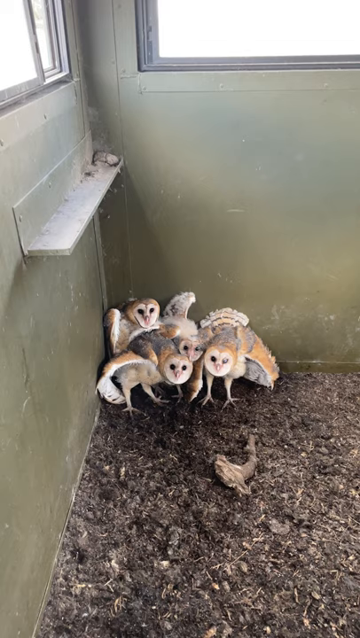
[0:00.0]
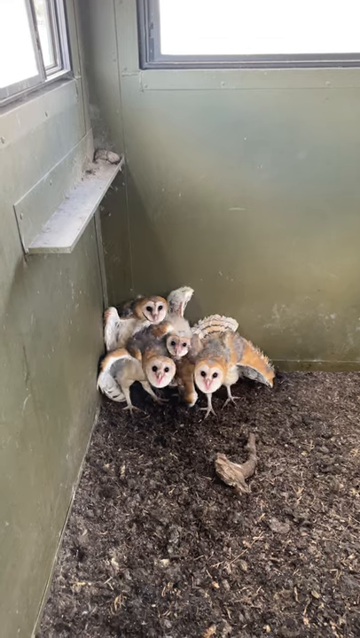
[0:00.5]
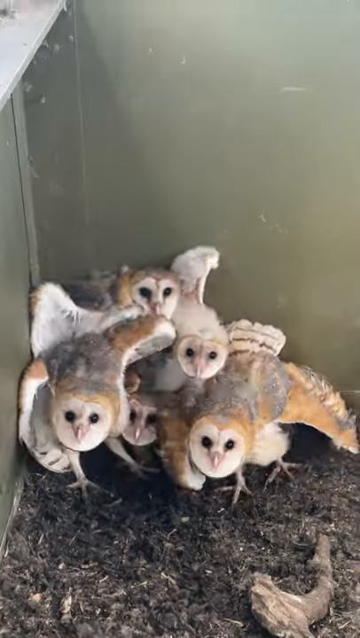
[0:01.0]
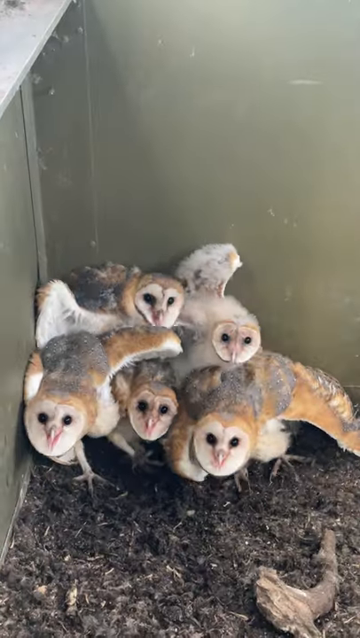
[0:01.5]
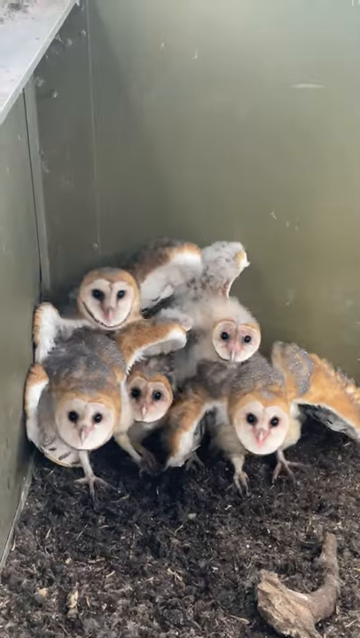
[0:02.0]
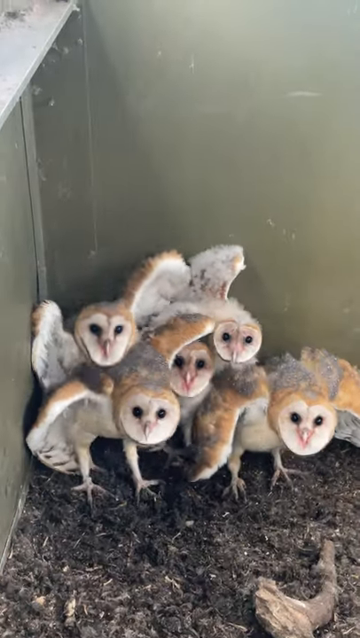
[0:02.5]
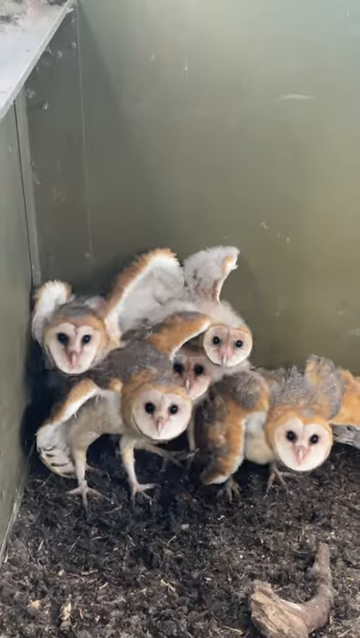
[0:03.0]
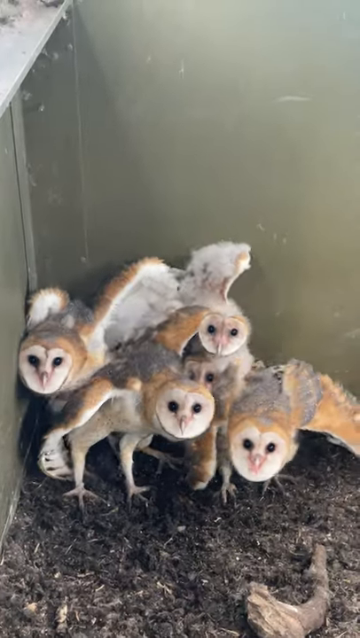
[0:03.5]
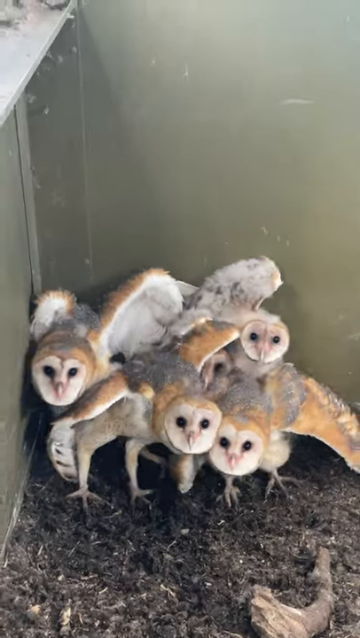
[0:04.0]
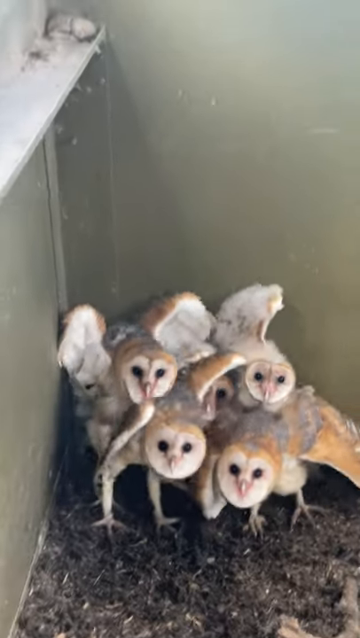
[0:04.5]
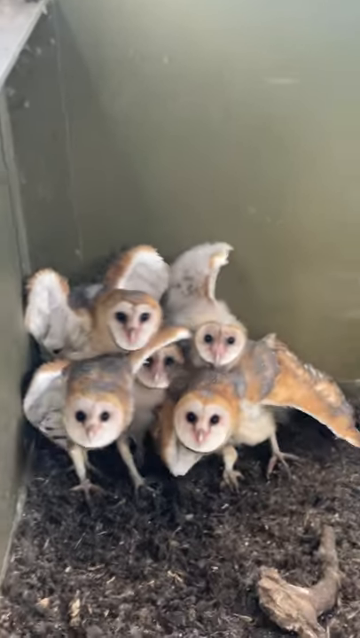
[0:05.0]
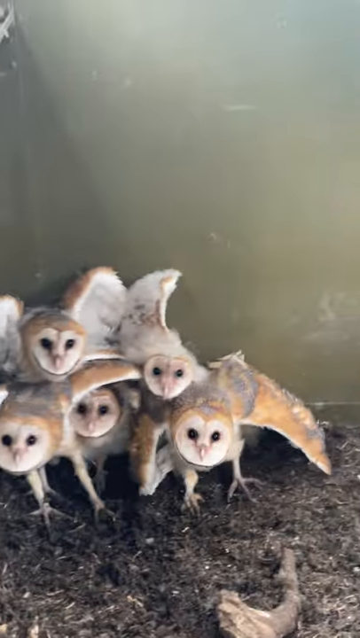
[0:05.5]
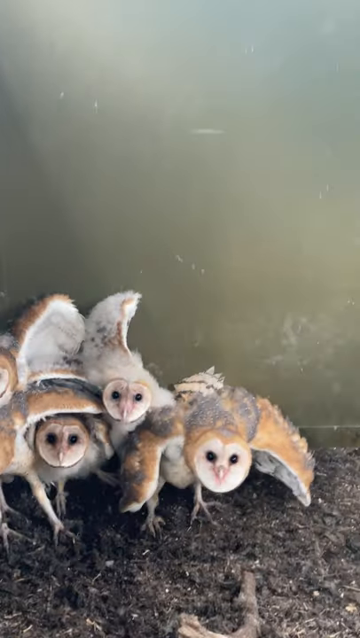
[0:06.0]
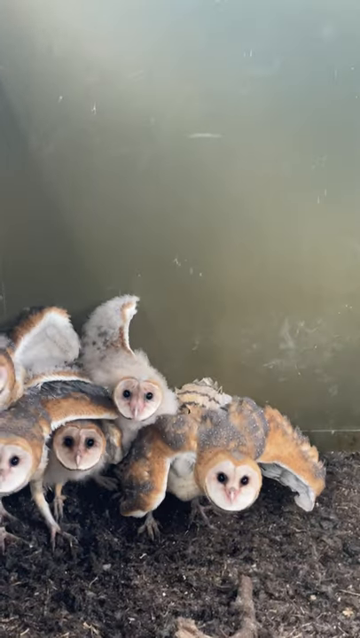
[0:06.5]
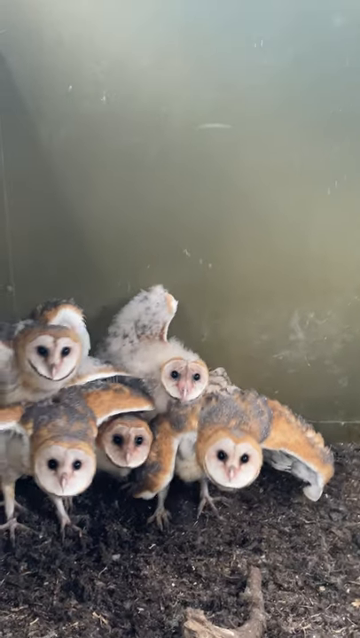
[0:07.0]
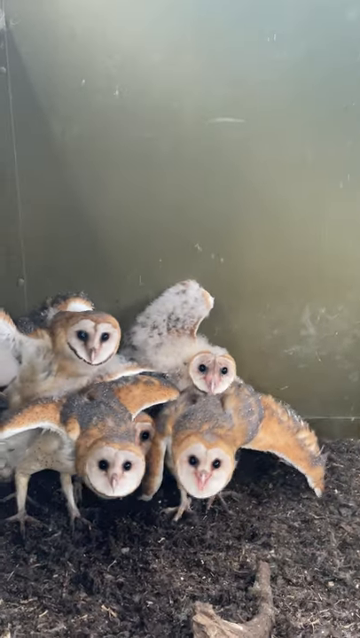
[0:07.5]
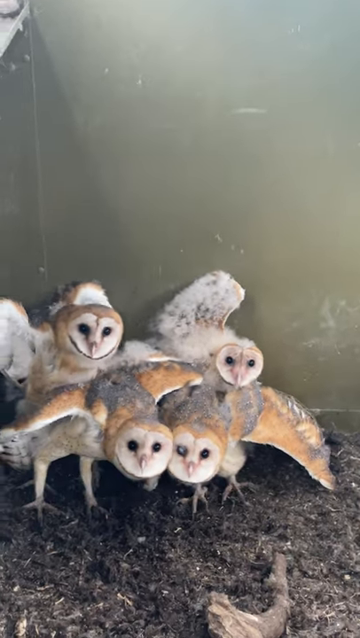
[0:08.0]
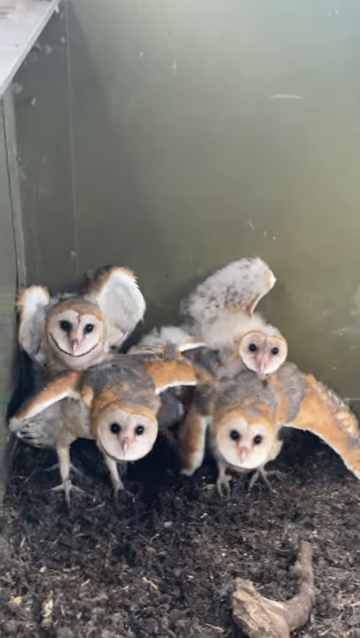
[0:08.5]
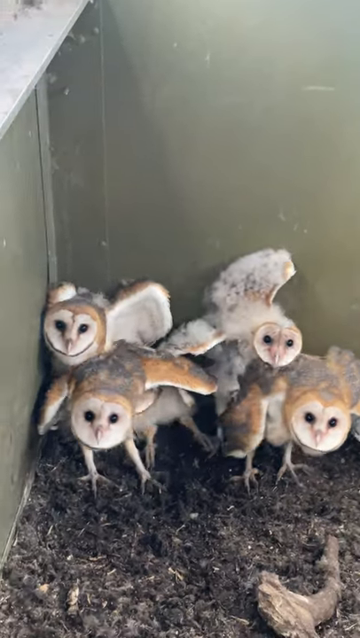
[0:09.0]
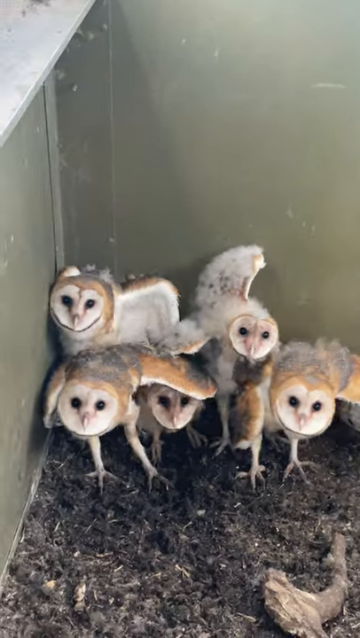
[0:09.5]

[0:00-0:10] Five baby barn owls are the main subjects. They have white faces and white feathered underbellies, and the tops of their bodies are a mix of grays and browns. Their eyes are very circular and black, with hooked beaks in the front. All five are somewhat huddled up in a corner, with their wings kind of outstretched to their sides, and they are kind of bobbing their heads back and forth while staring at the person taking the video in an almost defensive posture. The scene appears to be some type of housing for the owls. There is something like a green, smooth drywall, along with some windows. At the bottom, the floor is covered with dirt, and there is what looks to be a branch of some type.